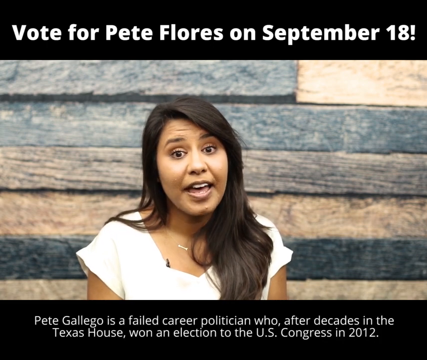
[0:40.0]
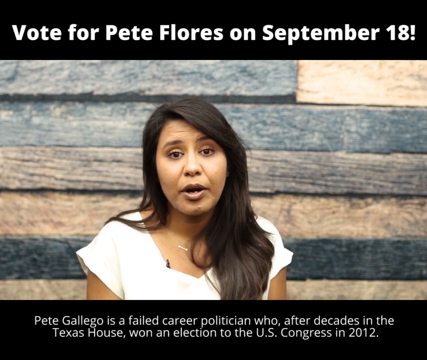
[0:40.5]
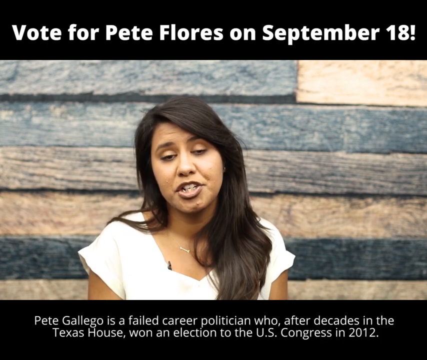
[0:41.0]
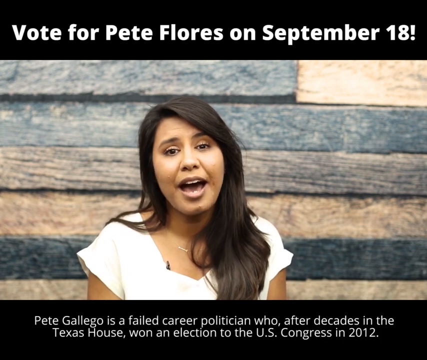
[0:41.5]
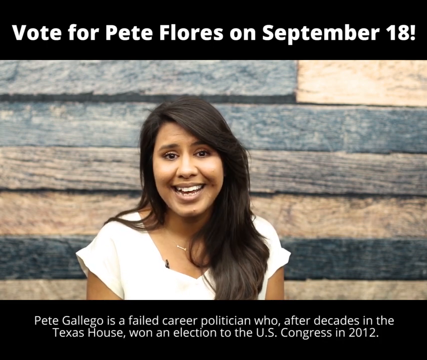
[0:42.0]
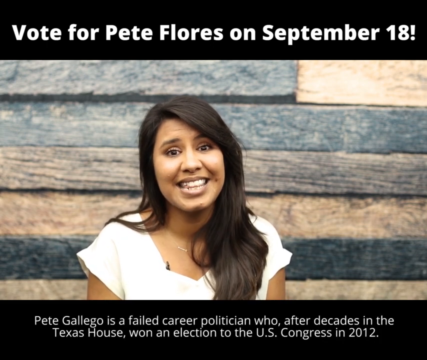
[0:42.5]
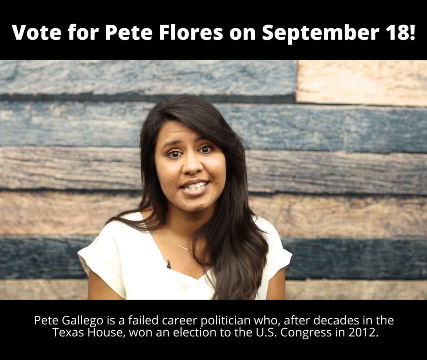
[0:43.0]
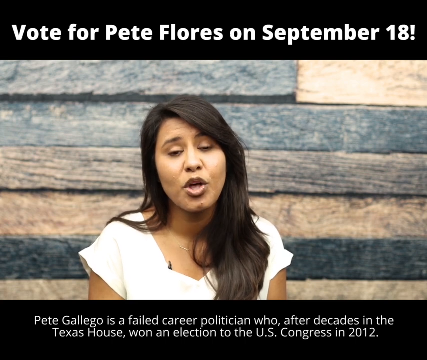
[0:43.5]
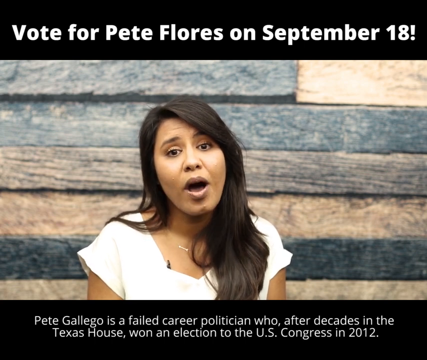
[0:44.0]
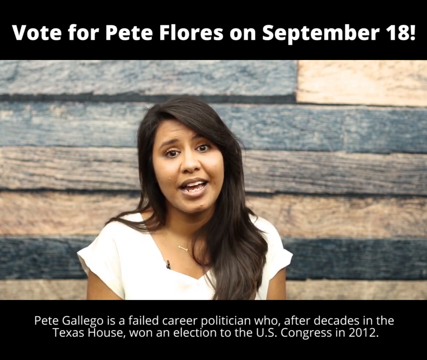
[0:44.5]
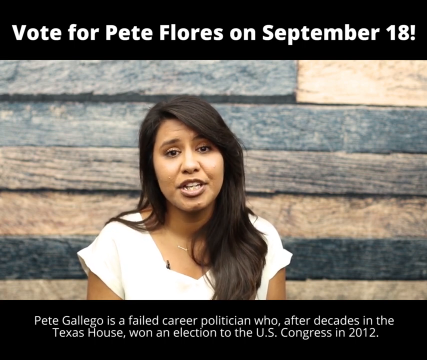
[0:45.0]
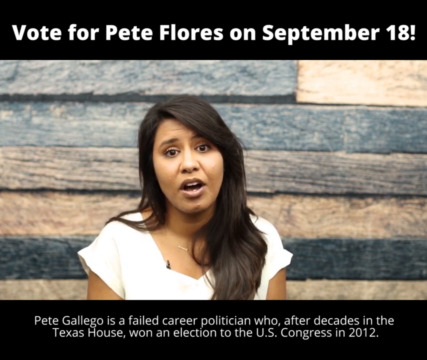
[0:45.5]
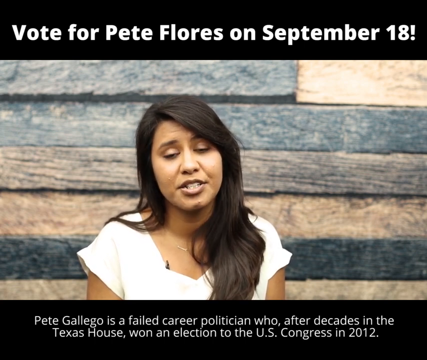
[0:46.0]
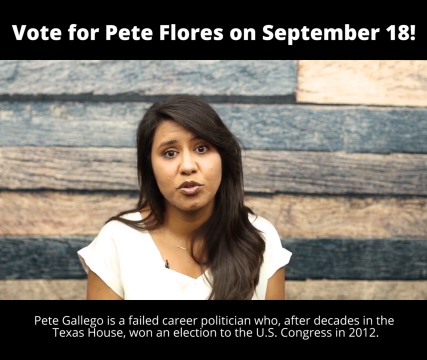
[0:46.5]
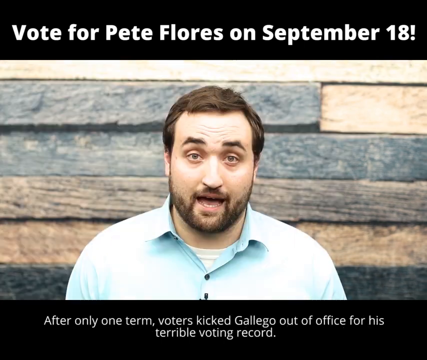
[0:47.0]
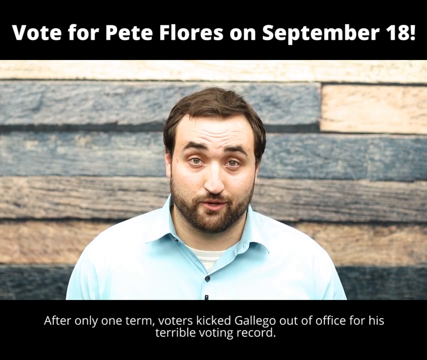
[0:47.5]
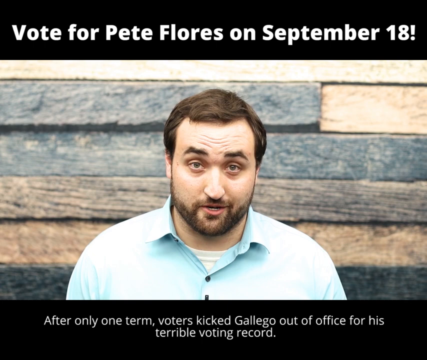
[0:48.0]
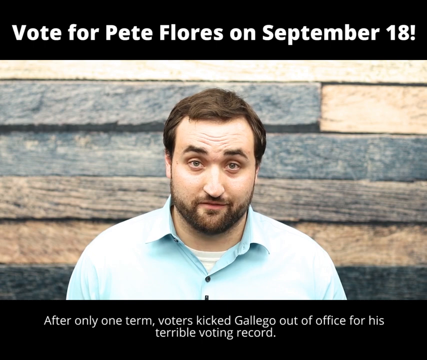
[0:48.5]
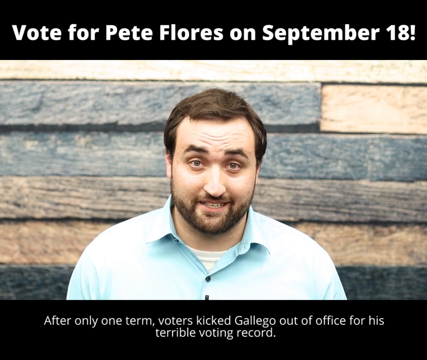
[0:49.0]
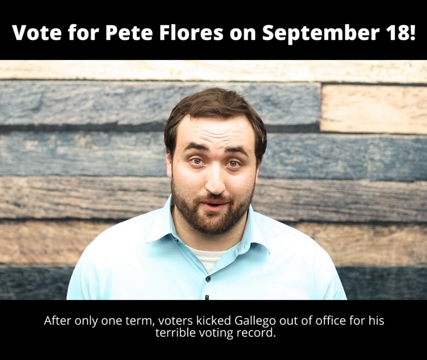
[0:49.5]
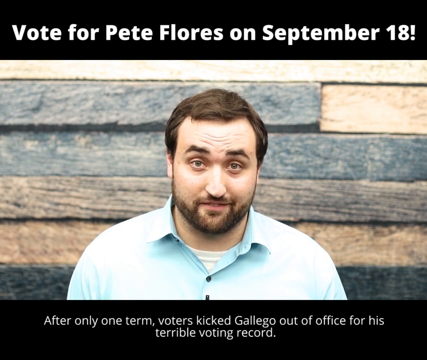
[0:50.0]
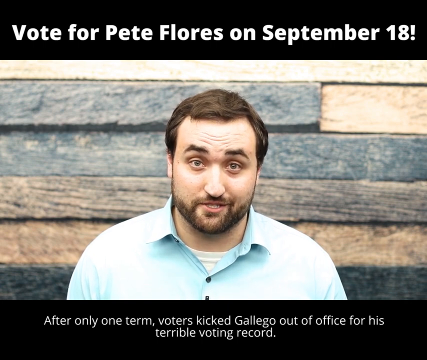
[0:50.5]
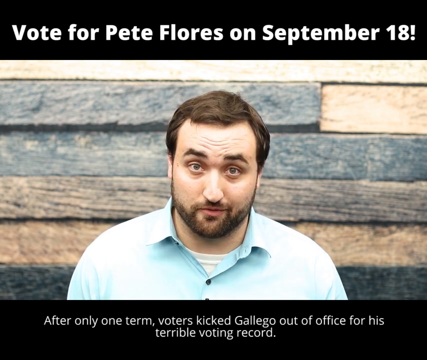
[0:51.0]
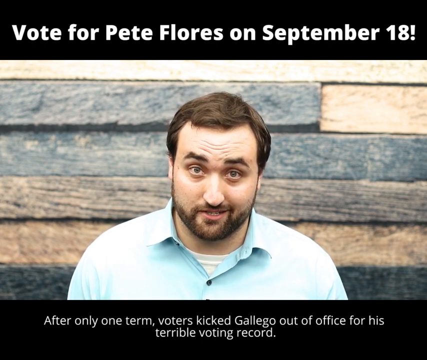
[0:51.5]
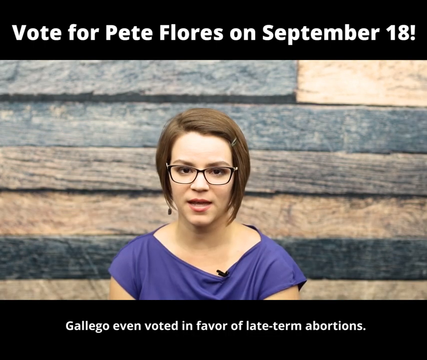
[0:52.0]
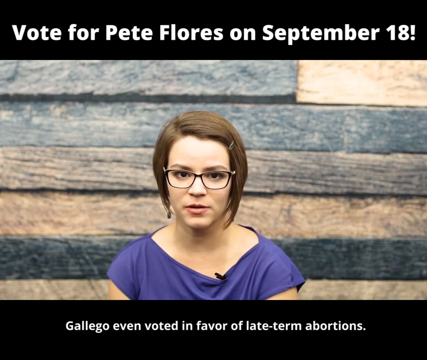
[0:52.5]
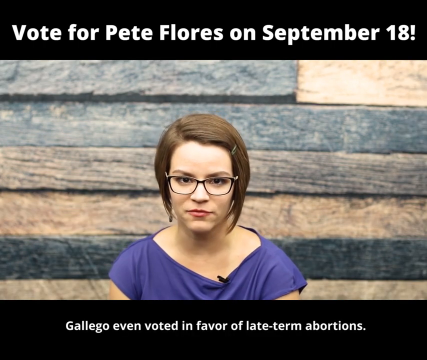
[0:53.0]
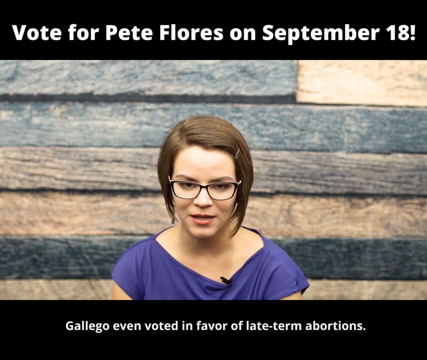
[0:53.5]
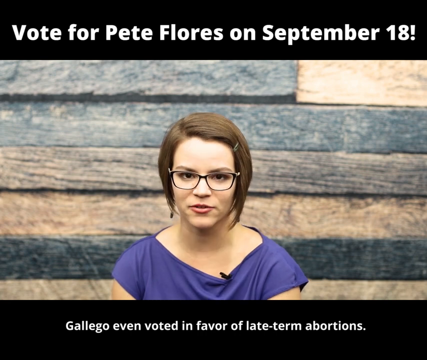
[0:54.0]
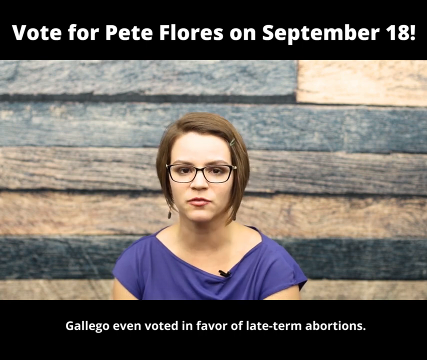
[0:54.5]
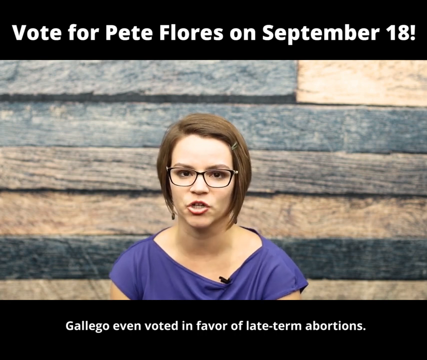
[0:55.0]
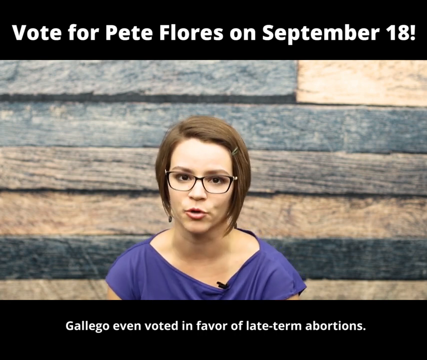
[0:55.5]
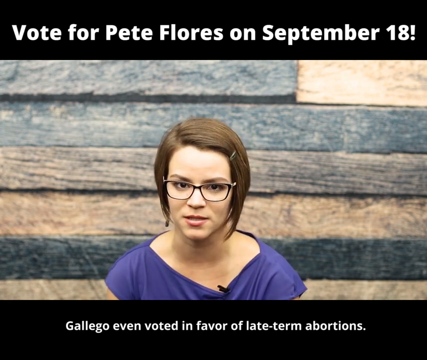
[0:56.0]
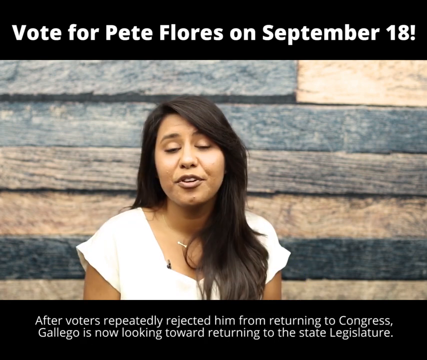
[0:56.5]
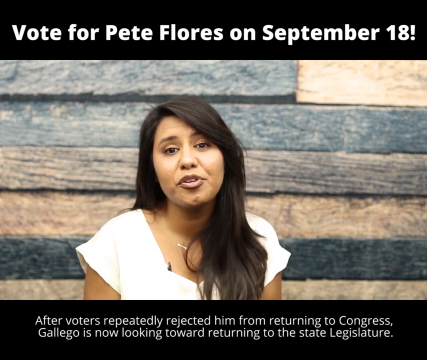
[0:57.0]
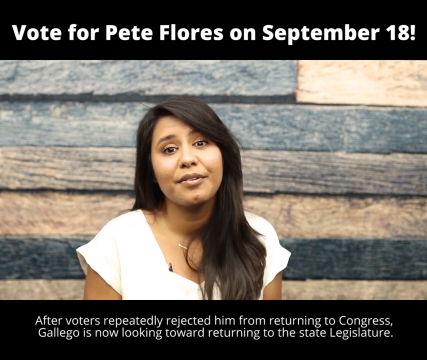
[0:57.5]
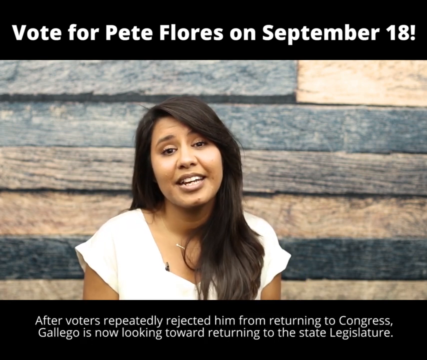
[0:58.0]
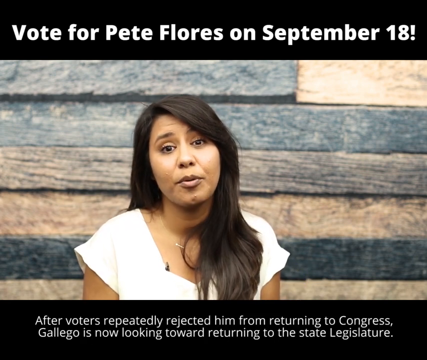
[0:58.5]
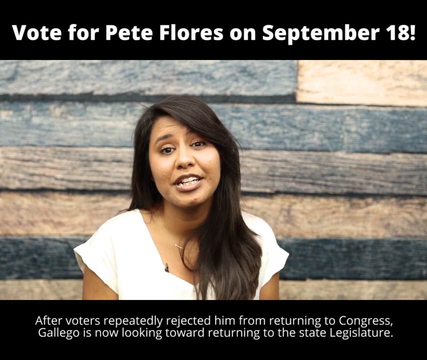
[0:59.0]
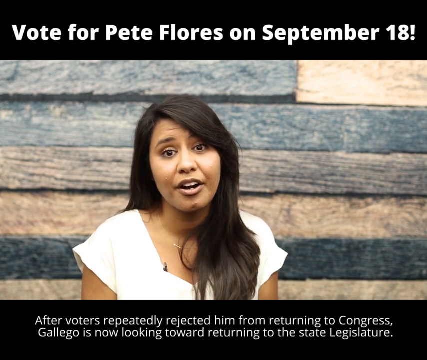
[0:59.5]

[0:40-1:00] A young woman with long black hair, wearing a white short-sleeved top, talks directly to the camera in front of a background of wooden slabs running horizontally across the wall. A banner above her says "vote for Pete Flores on September the 18th", and writing underneath her says "Pete Gallego is a failed career politician who, after decades in the Texas House, won an election to the US Congress in 2012." The view changes to a man with short brown hair, a beard and a moustache, wearing a blue collared shirt with black buttons. Next is a woman with short brown hair and glasses in a blue short-sleeved top, with a microphone attached to the top of her front. The video returns to the original woman with long black hair, and the writing underneath her now says "after voters repeatedly rejected him from returning to Congress, Gallego is now looking towards returning to the state legislature."